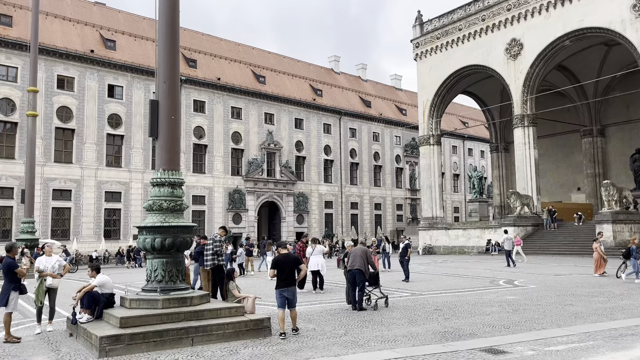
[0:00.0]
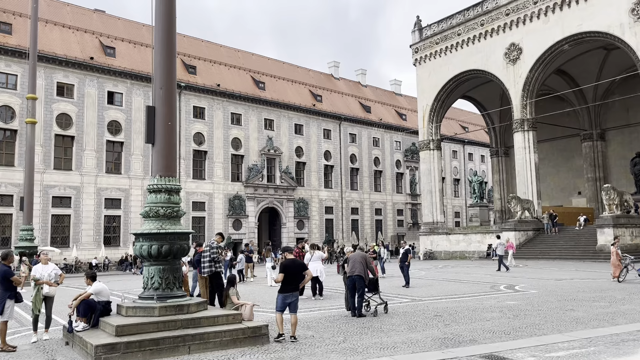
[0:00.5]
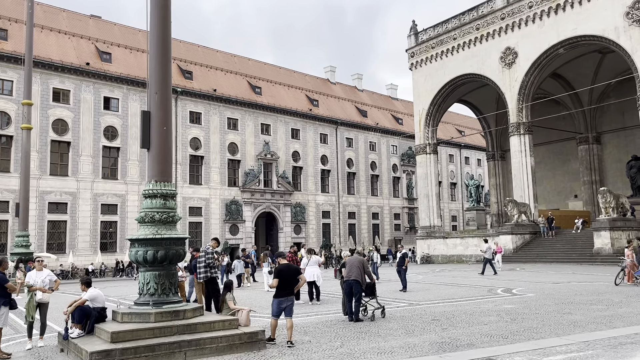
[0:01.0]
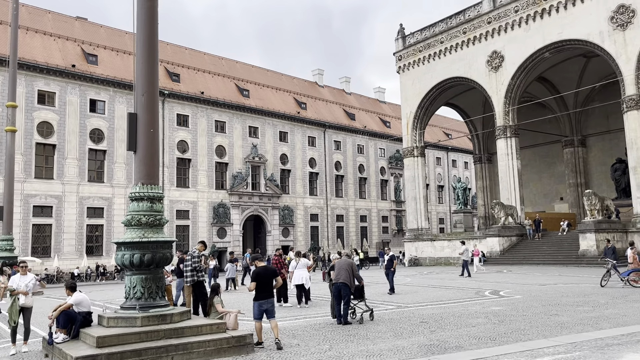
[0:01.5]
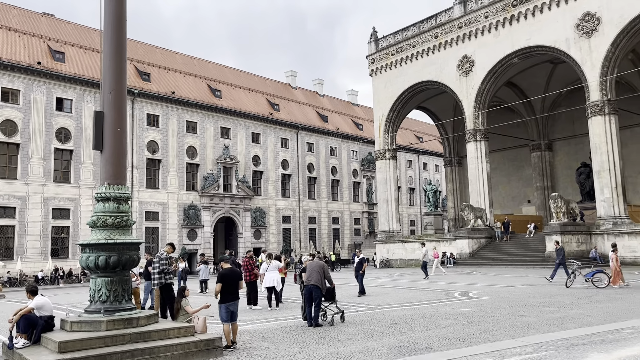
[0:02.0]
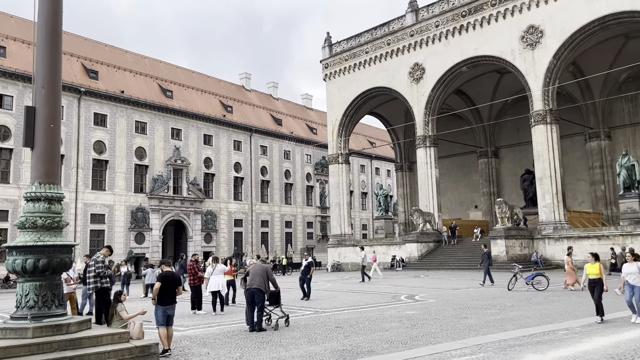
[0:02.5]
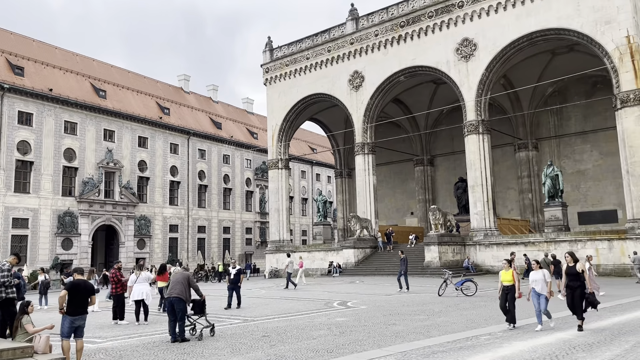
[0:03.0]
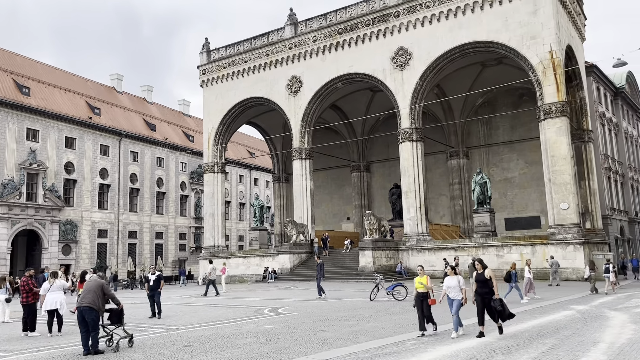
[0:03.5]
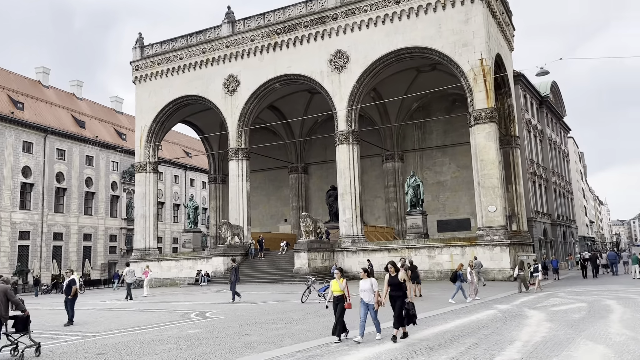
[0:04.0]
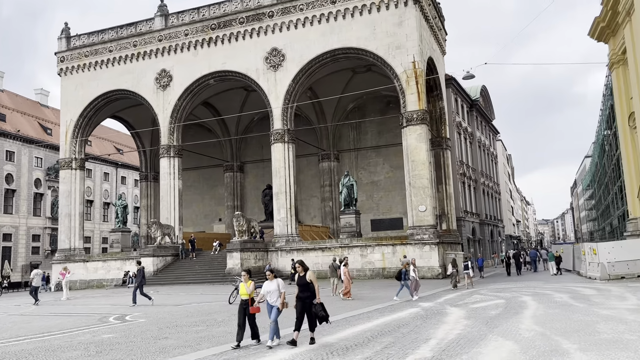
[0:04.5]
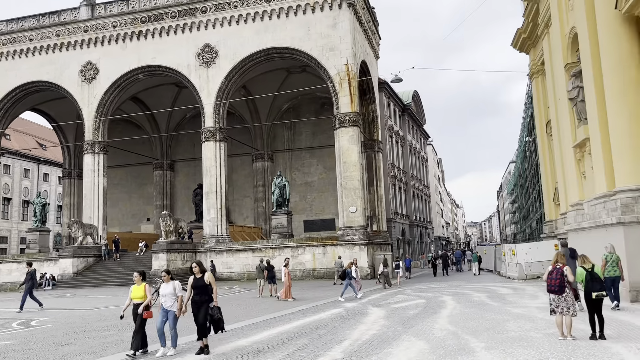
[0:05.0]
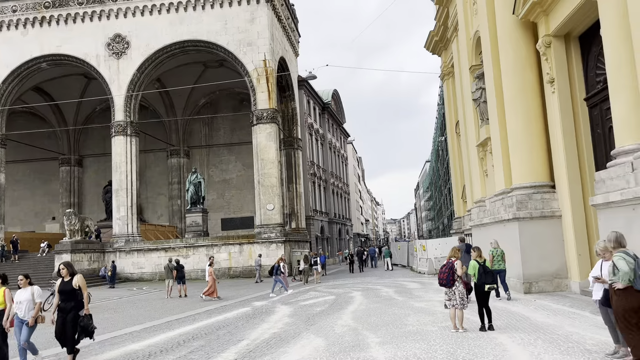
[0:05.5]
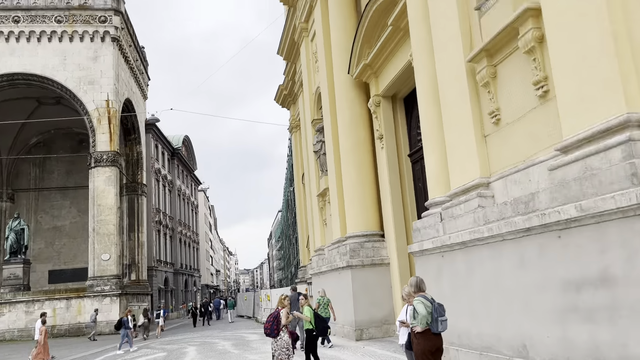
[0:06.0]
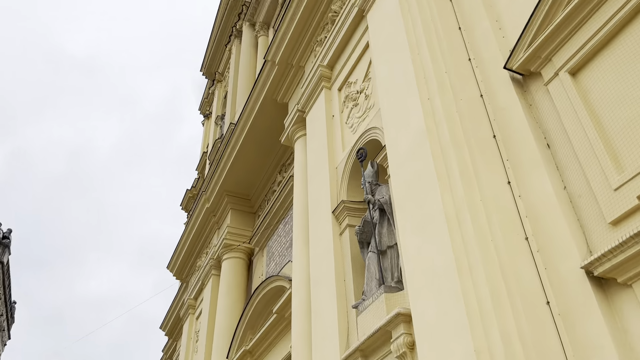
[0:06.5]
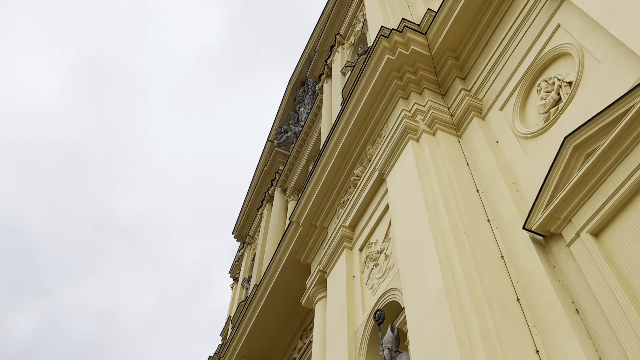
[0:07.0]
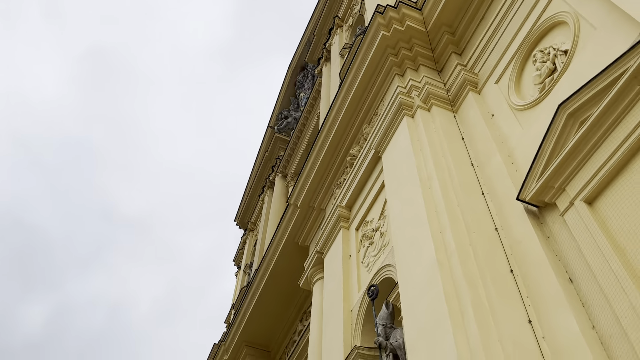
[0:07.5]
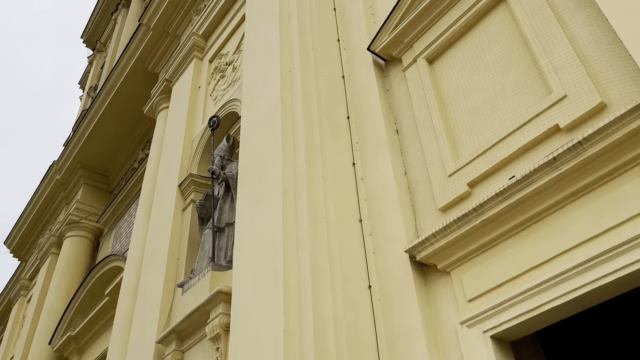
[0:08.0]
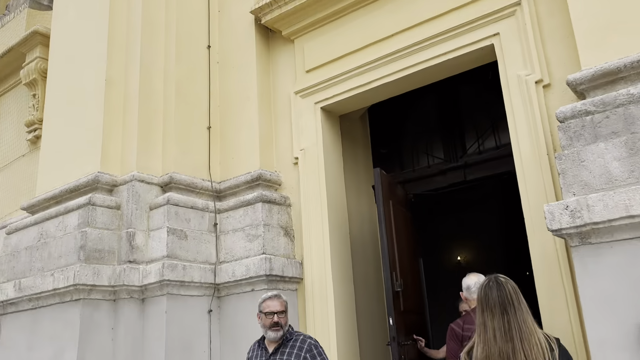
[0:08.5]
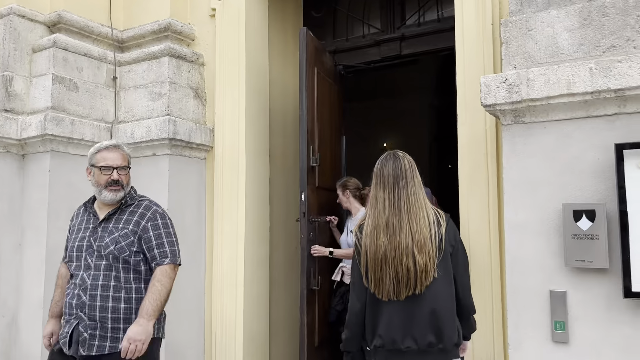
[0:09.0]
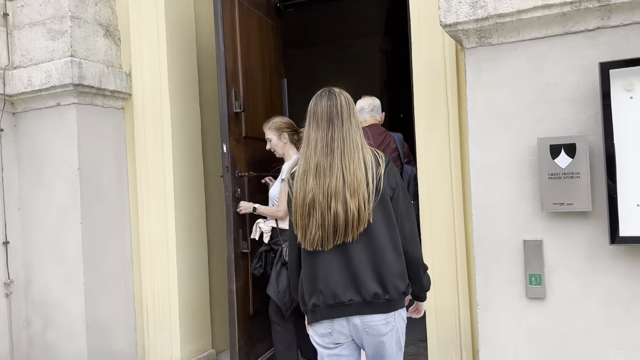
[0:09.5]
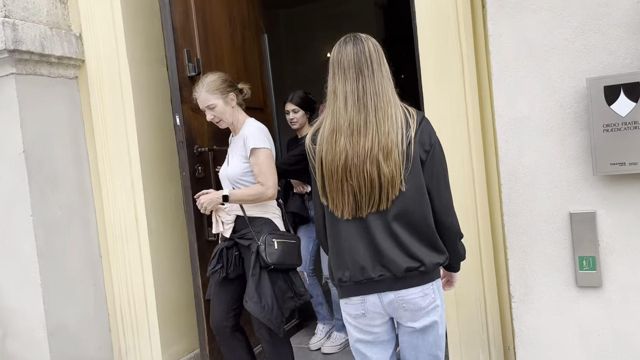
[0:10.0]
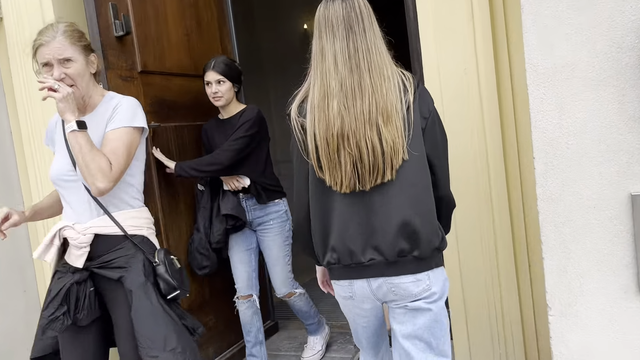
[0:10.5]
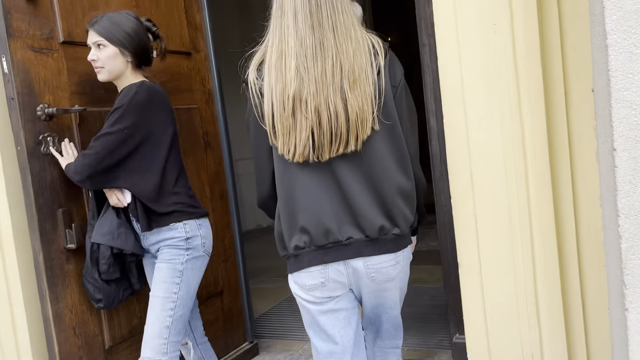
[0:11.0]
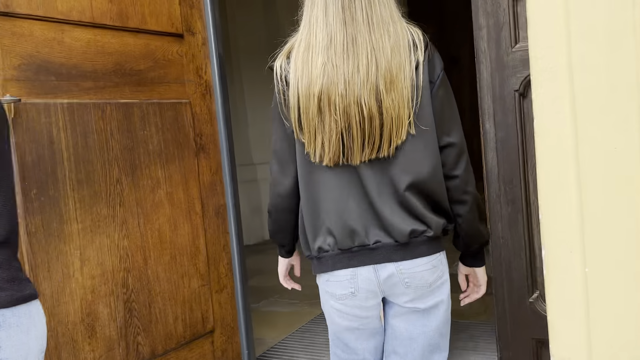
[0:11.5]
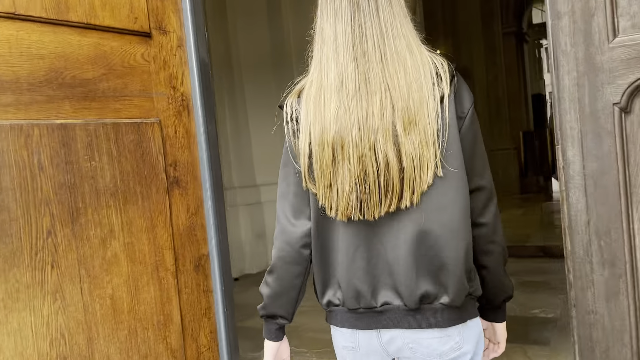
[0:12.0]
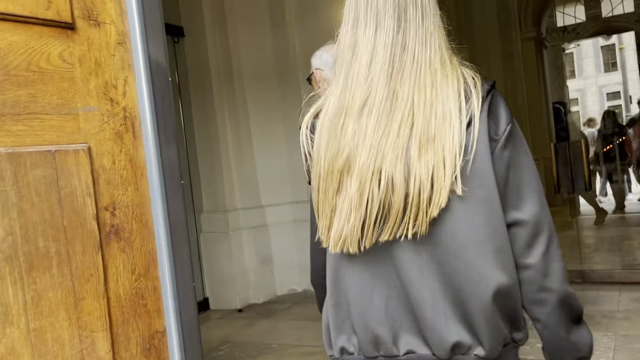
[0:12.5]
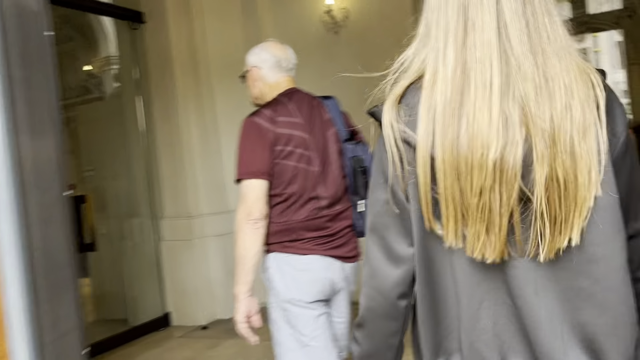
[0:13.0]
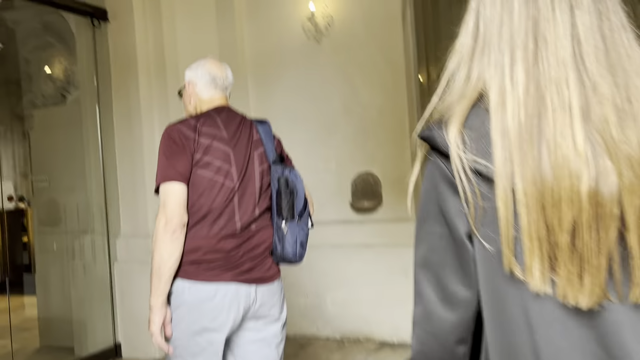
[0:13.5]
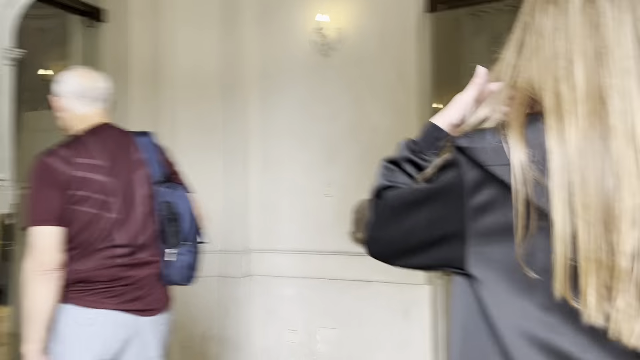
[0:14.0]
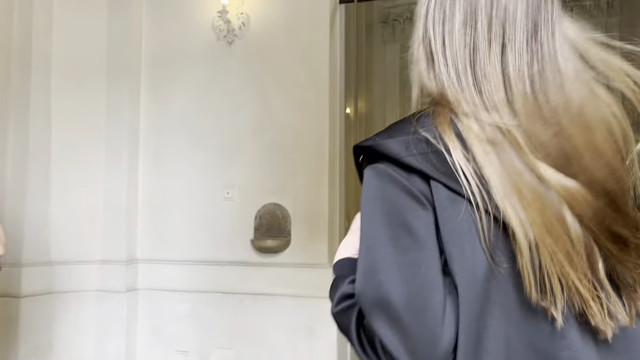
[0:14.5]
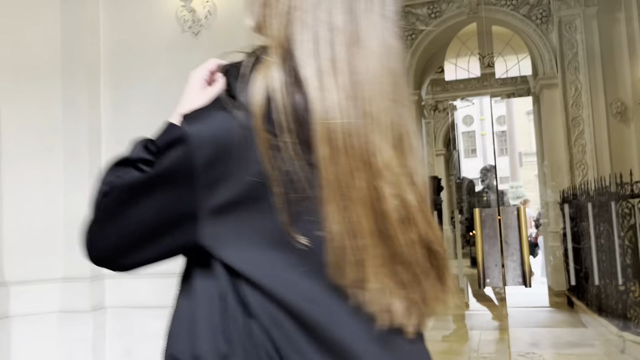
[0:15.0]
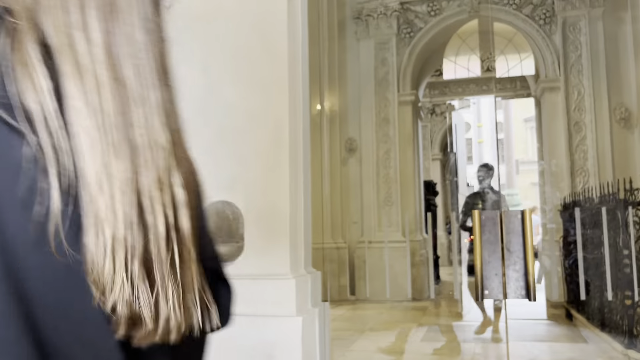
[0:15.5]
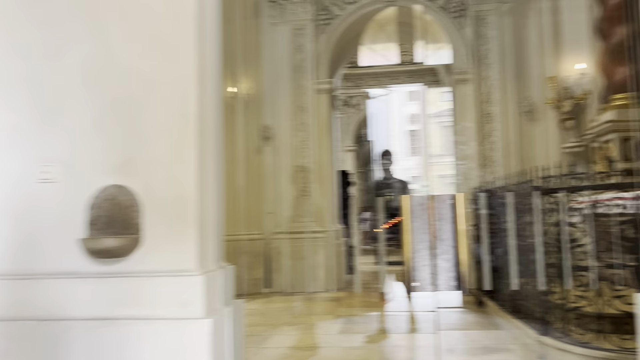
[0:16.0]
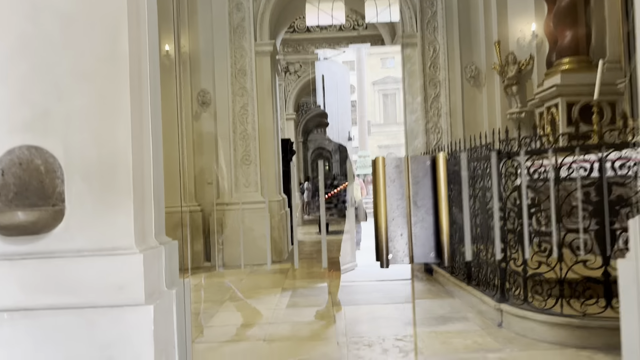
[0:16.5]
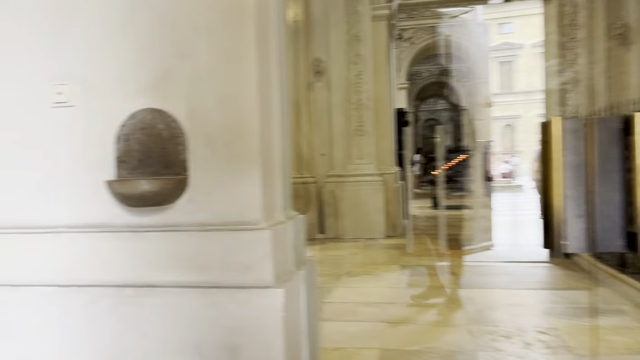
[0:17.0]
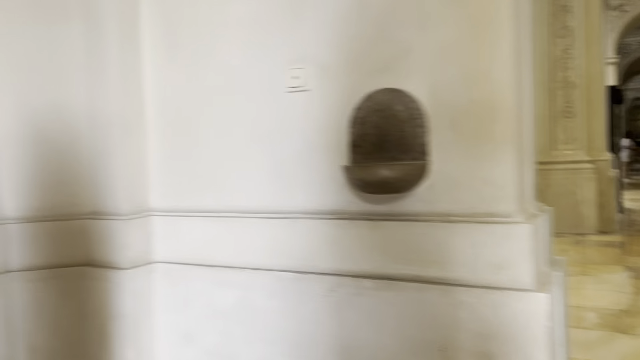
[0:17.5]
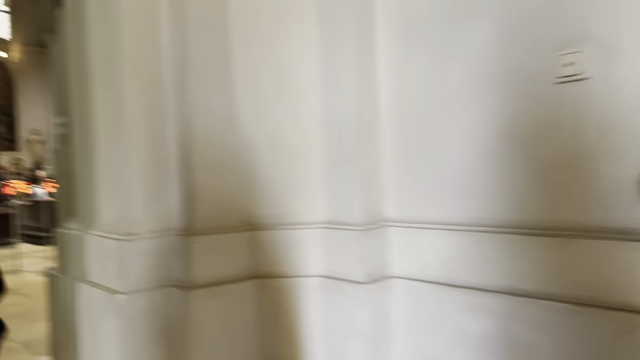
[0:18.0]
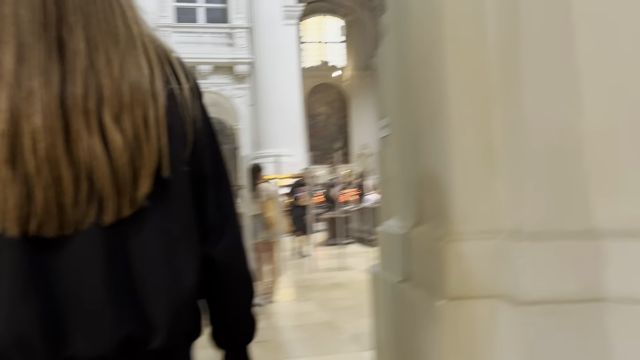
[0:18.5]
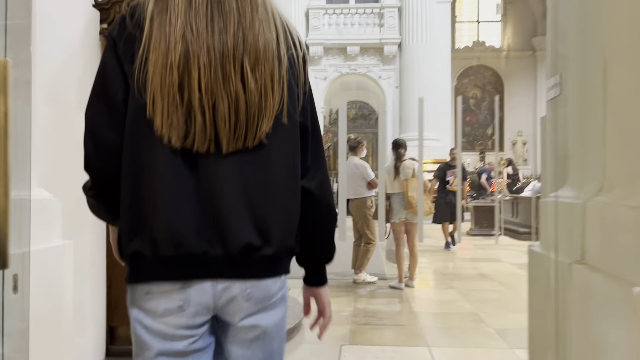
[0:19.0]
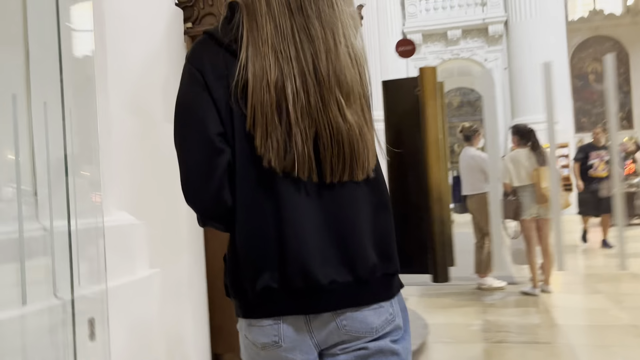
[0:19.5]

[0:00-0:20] In the daytime, a city square is crowded with people, many of whom look like locals. A couple has a baby in a carriage. The buildings around the square are not tall and are apparently older, possibly historic sites. The day is overcast, and the skies are pale blue. People are dressed differently: some wear short sleeves and shorts, others long sleeves, and some have on jackets. Several poles, possibly light poles, stand set in concrete; they look like they might be brass, though not polished. The camera pans to the right and focuses on a yellow building, moving up to show its top. The person filming then enters through the door behind a woman in a black jacket. Inside, there are glass double doors to the left and straight ahead.